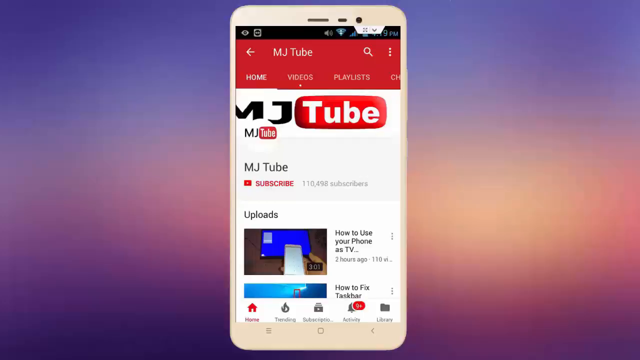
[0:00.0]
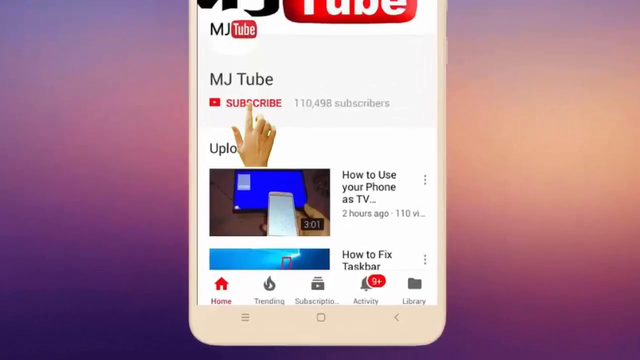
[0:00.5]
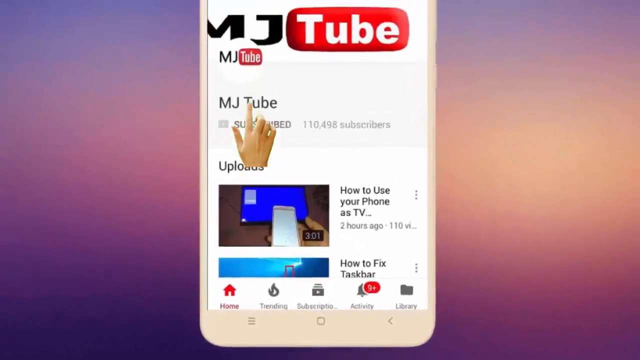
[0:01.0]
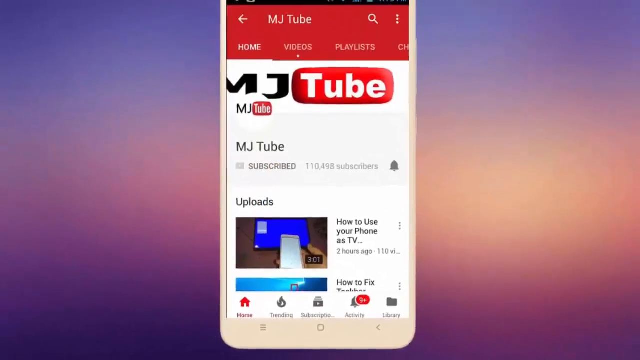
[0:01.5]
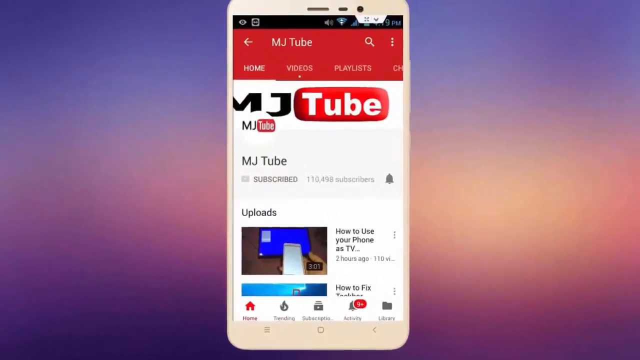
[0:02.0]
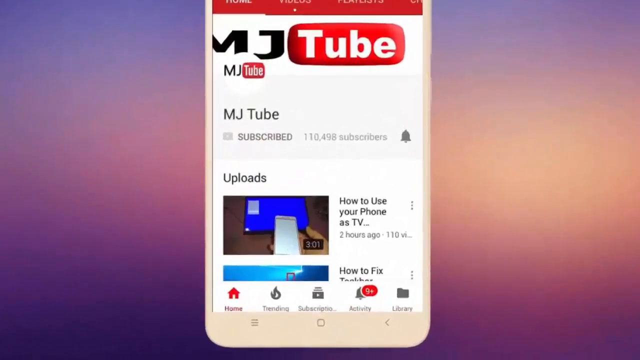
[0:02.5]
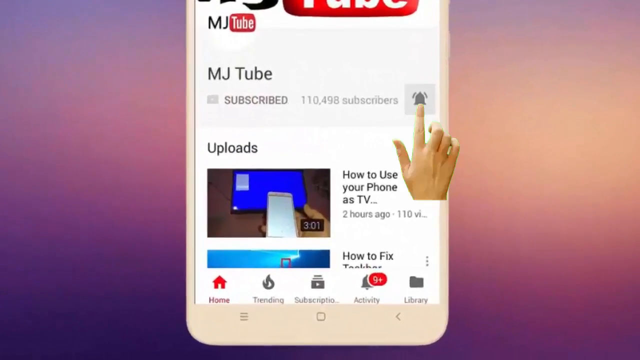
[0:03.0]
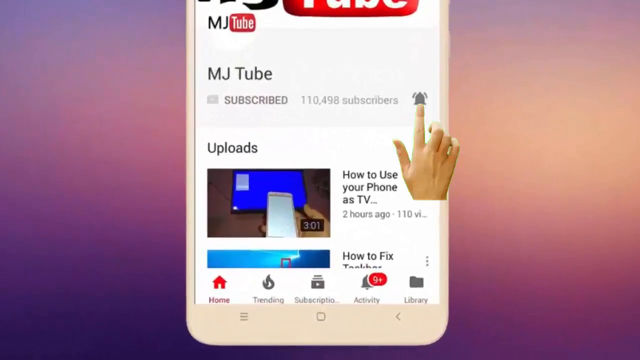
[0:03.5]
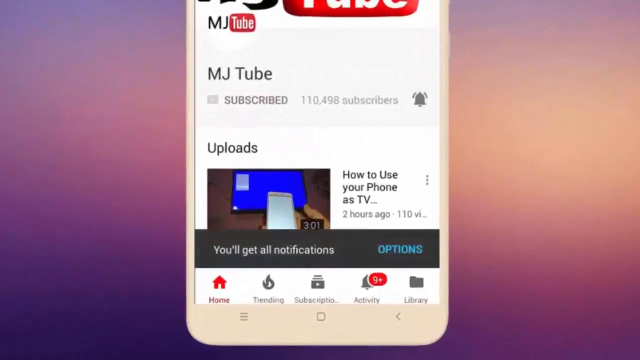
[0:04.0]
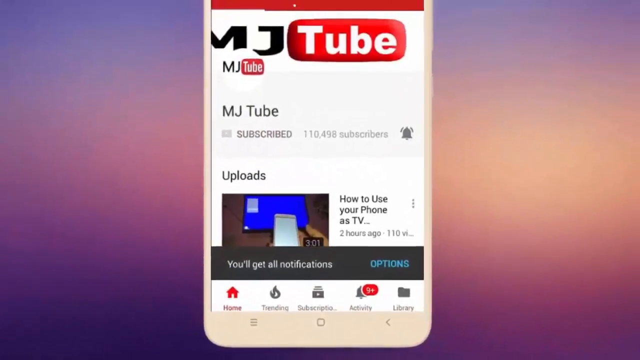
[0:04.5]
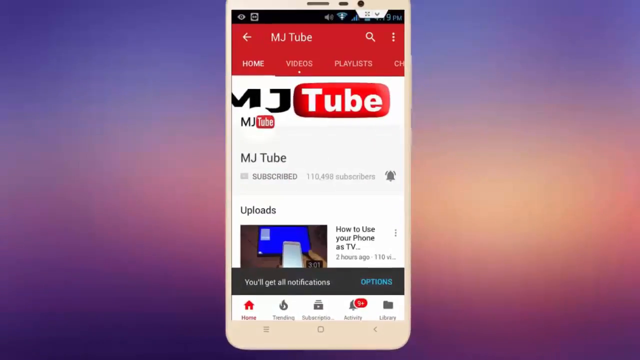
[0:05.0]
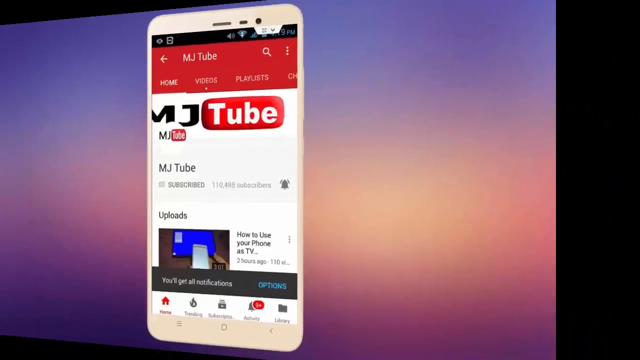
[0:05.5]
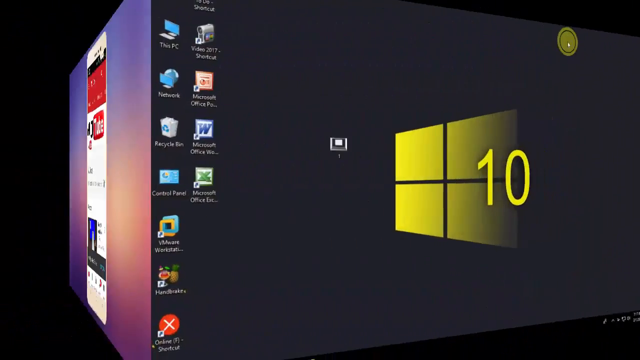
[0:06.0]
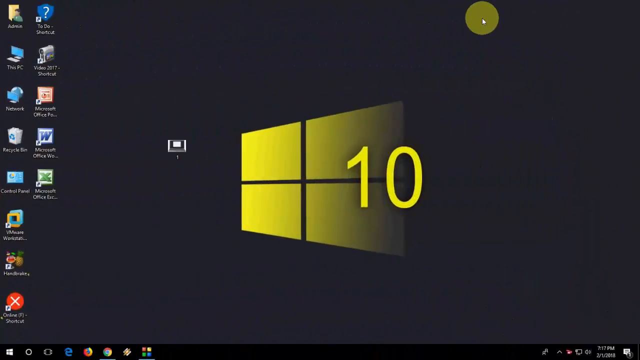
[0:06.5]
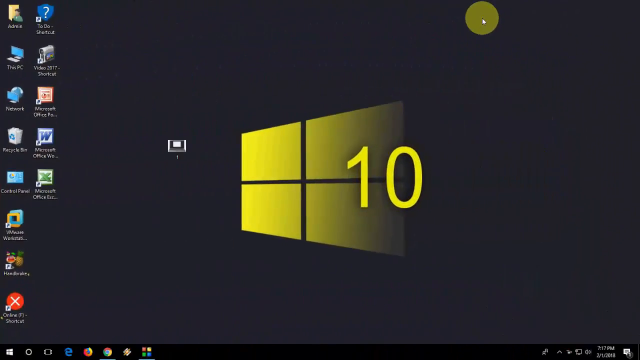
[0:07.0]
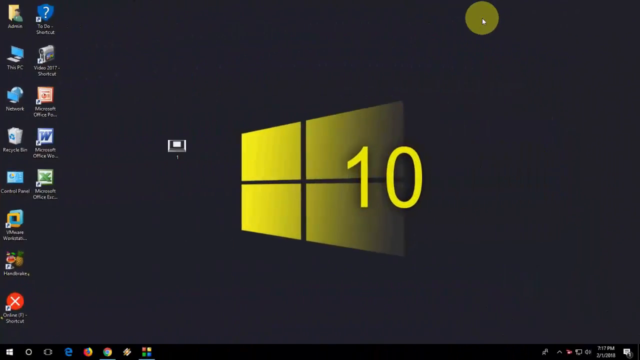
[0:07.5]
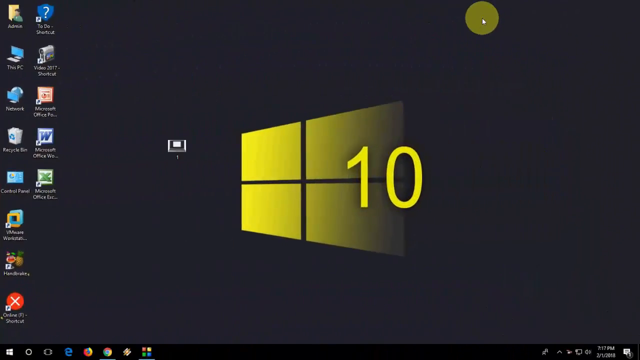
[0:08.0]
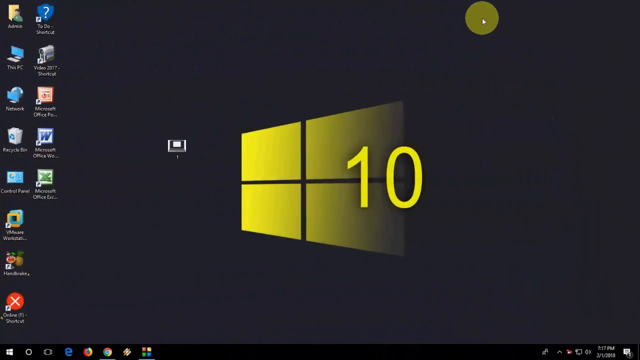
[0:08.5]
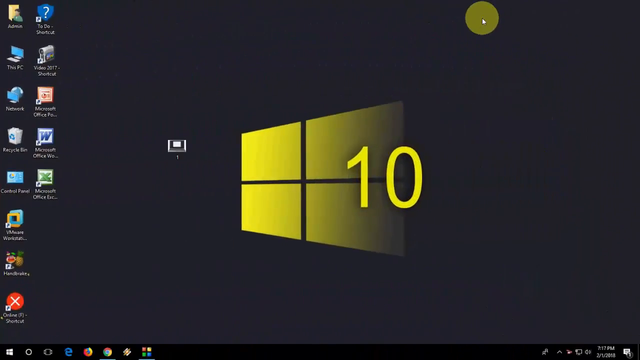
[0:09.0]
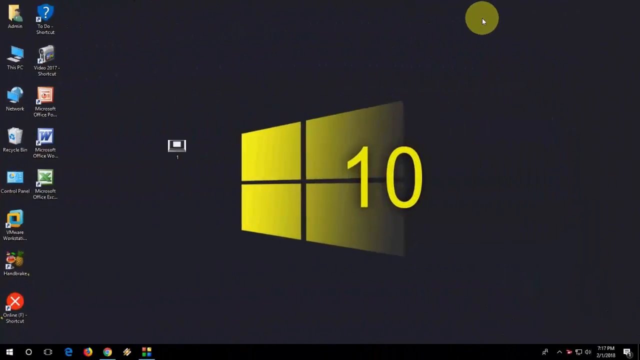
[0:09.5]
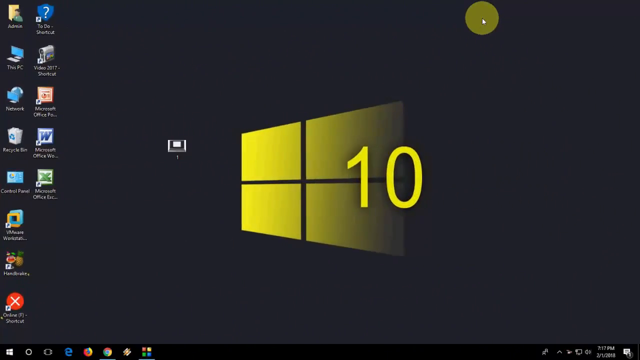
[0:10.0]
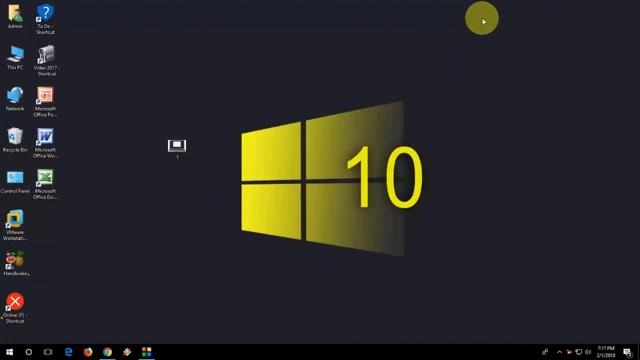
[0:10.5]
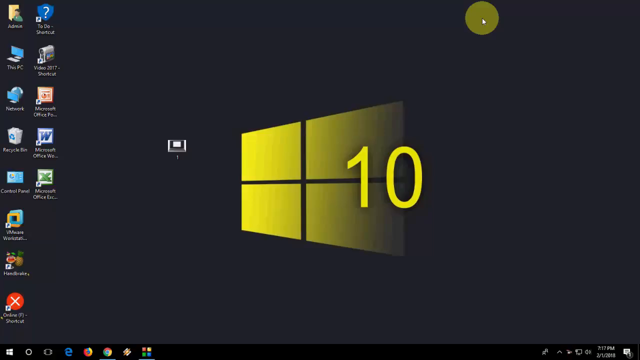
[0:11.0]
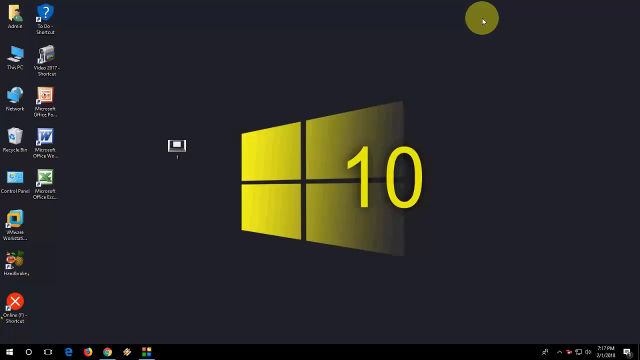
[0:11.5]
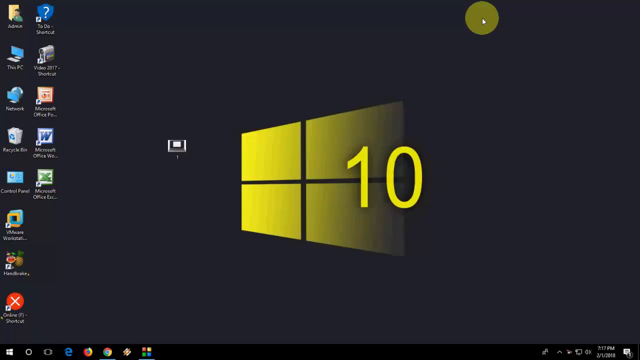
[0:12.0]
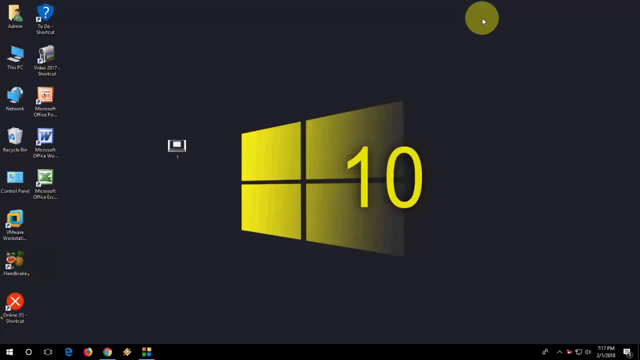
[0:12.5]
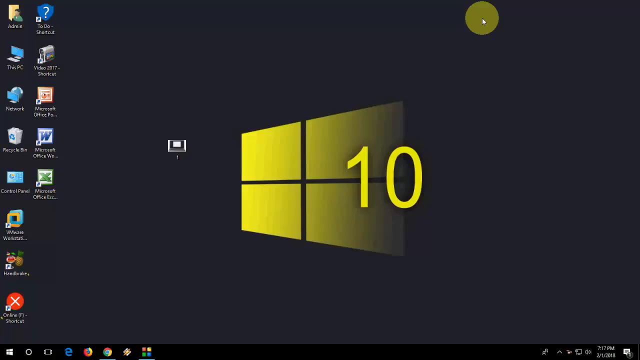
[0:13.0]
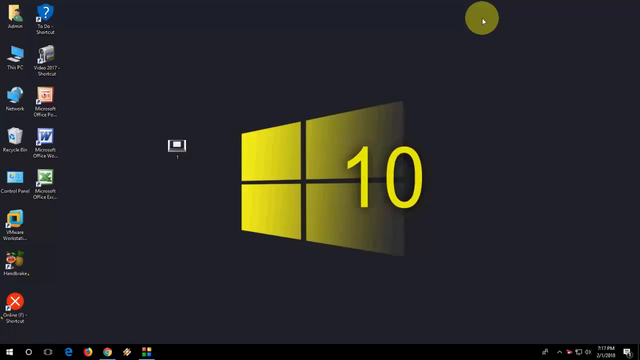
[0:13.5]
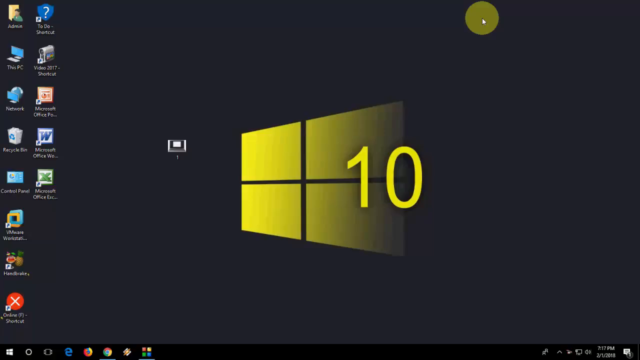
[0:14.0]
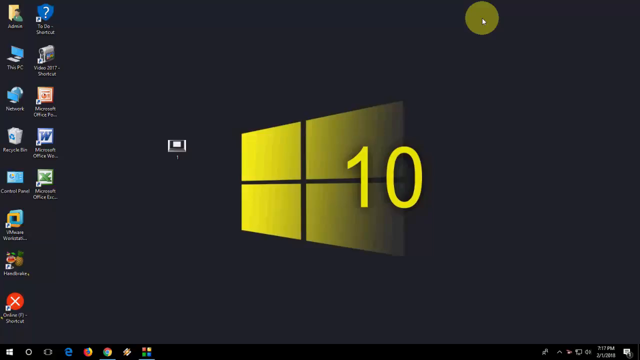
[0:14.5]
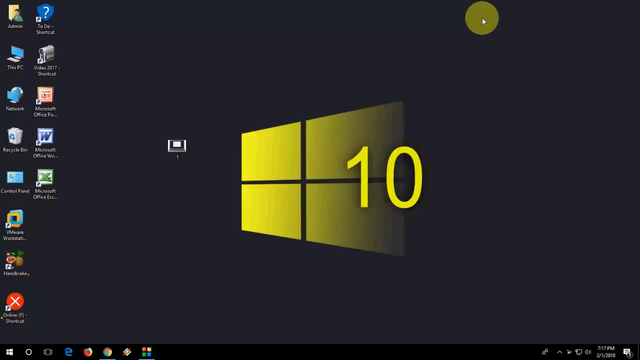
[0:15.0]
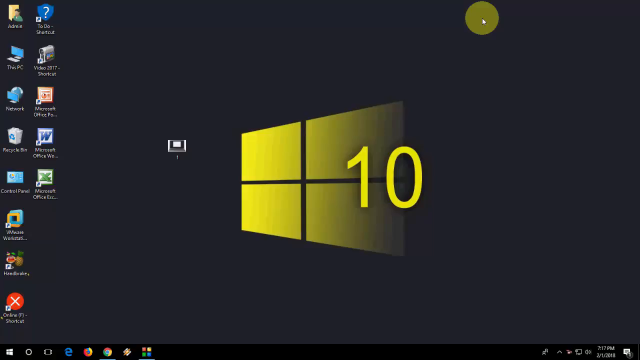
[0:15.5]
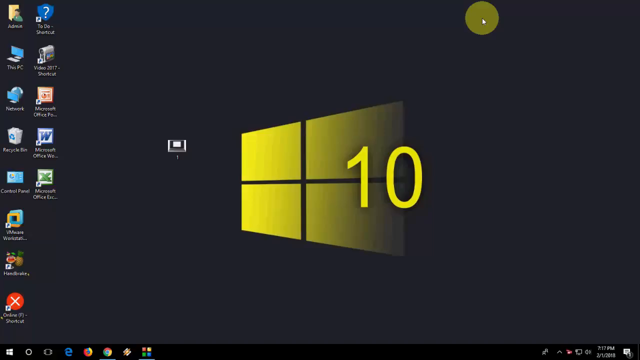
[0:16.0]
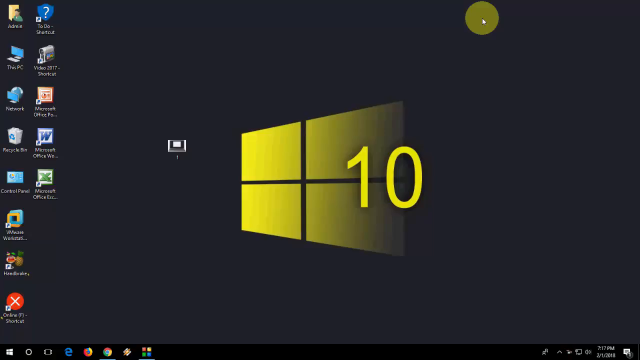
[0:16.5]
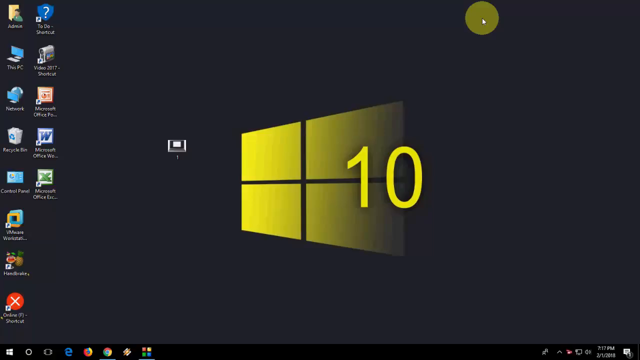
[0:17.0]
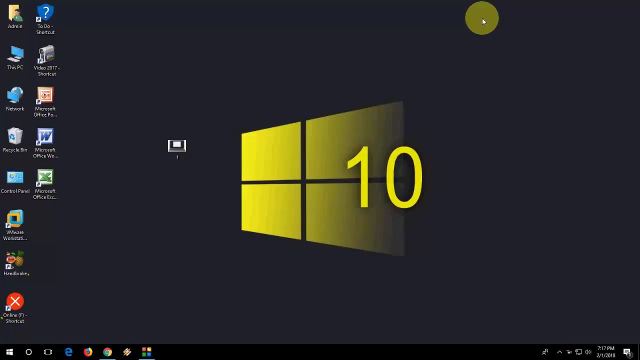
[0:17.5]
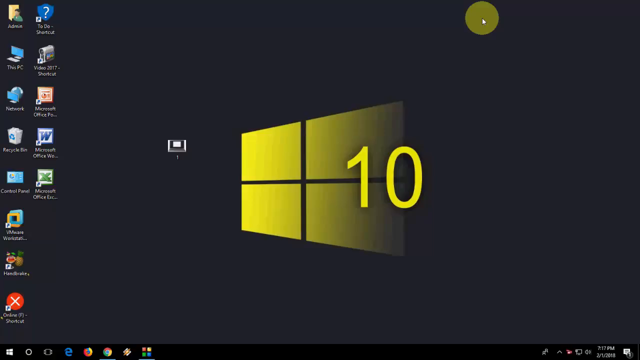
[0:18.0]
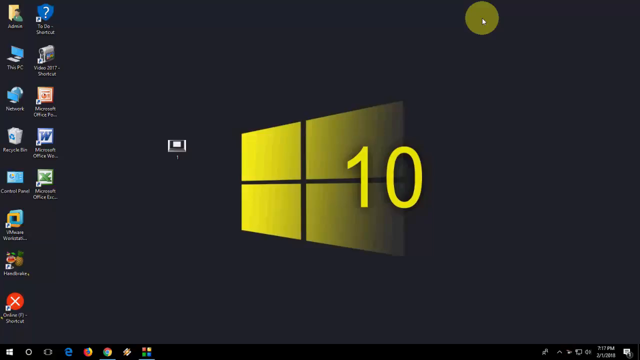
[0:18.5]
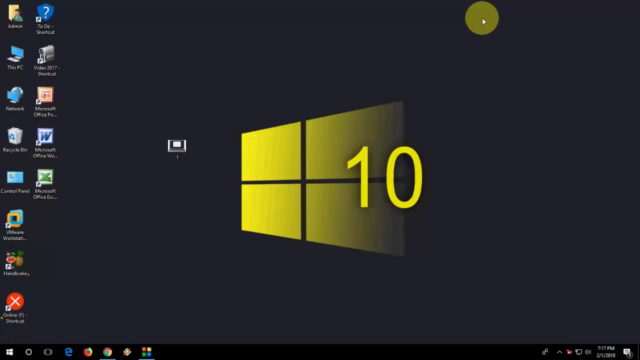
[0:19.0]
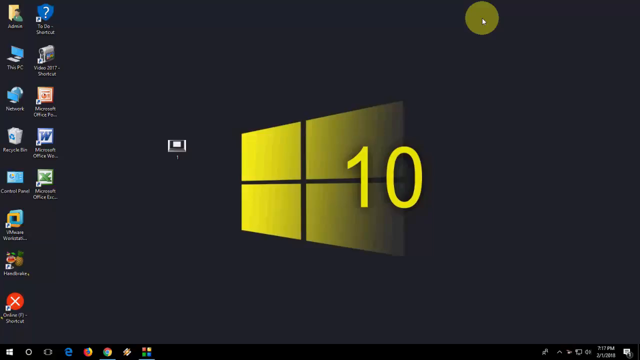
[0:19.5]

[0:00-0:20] The video opens with an image of a cell phone showing a YouTube channel, possibly the one that published the video, recommending that users subscribe and activate notifications to be aware of any new publication. It then moves to the desktop of a computer running Windows 10. The background is dark, and in the center there is a yellow or green Windows logo. Various applications are installed, such as Microsoft Office, Handbrake and VMware, among others. In the middle of the desktop there is a video file titled "1". The mouse cursor is at the top right with a yellow circle around it.